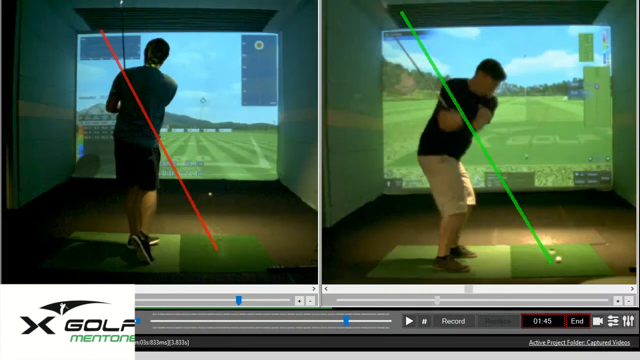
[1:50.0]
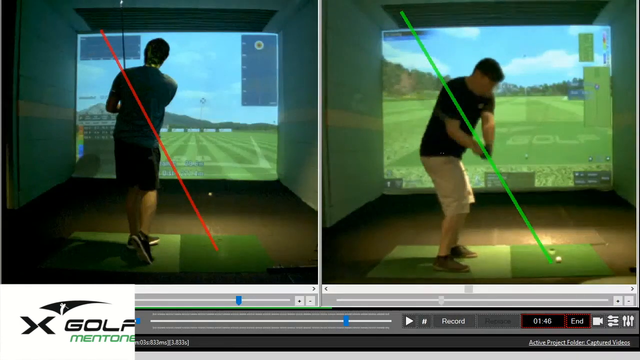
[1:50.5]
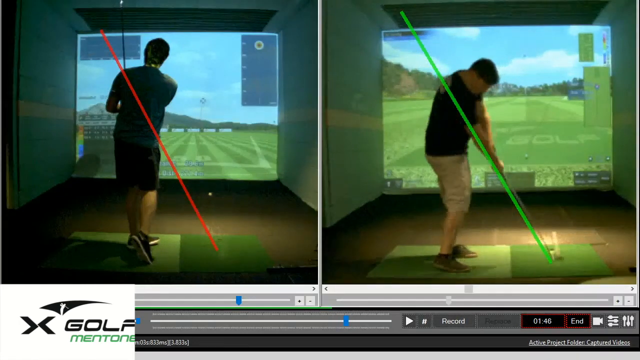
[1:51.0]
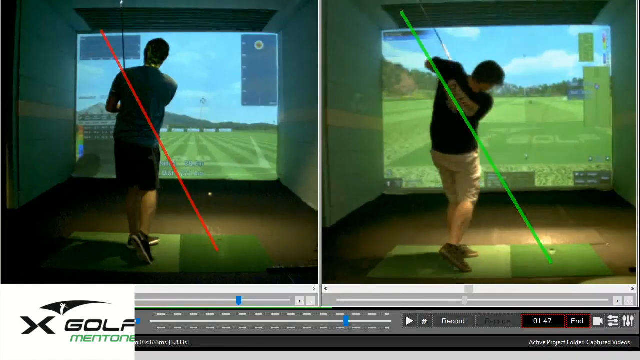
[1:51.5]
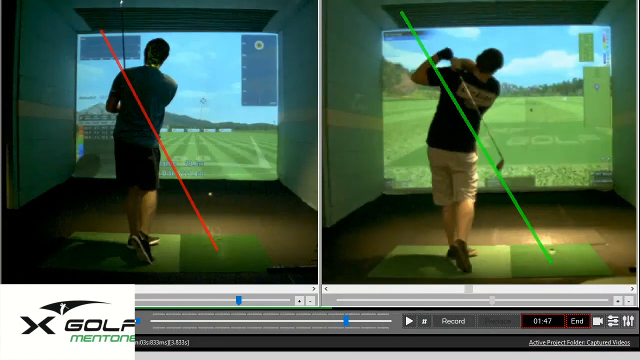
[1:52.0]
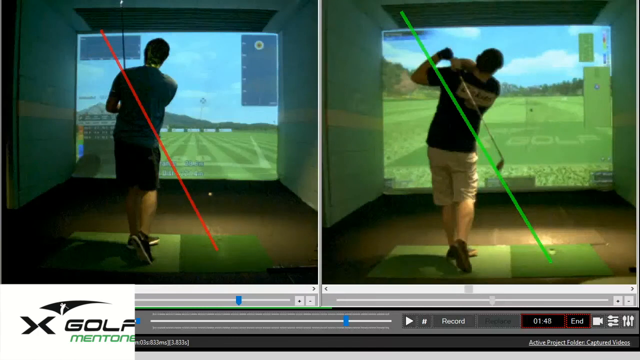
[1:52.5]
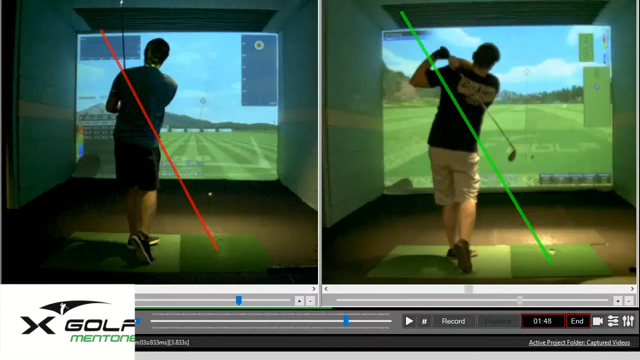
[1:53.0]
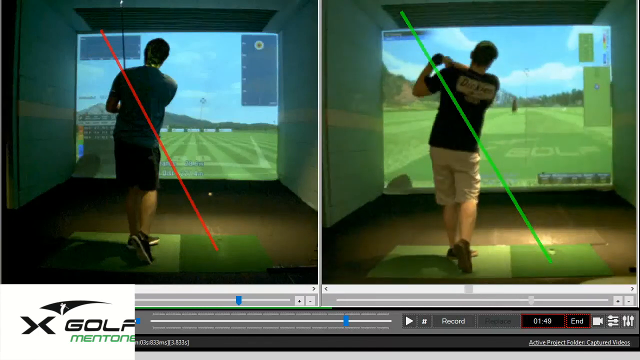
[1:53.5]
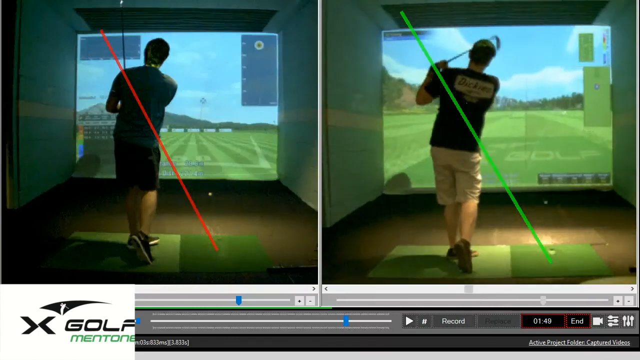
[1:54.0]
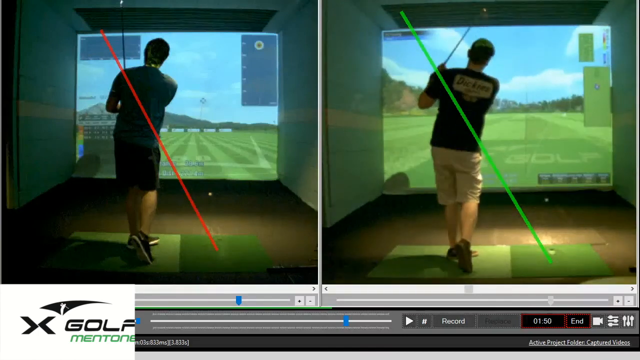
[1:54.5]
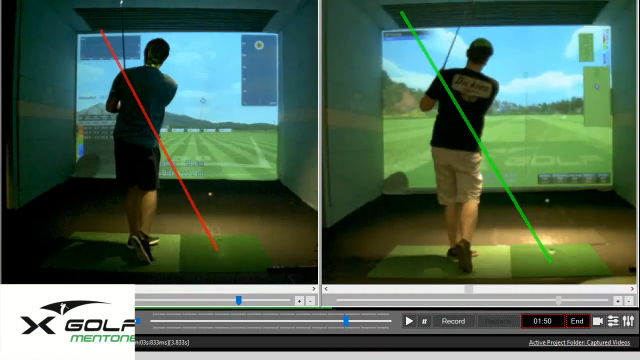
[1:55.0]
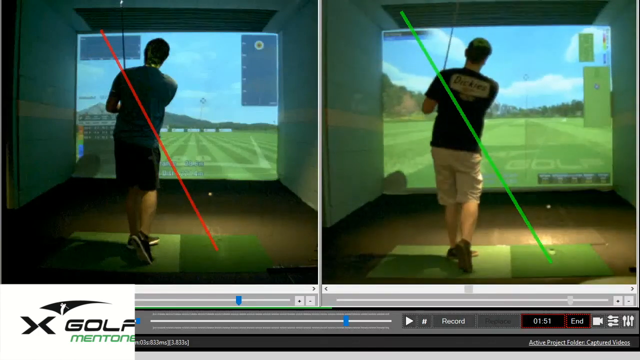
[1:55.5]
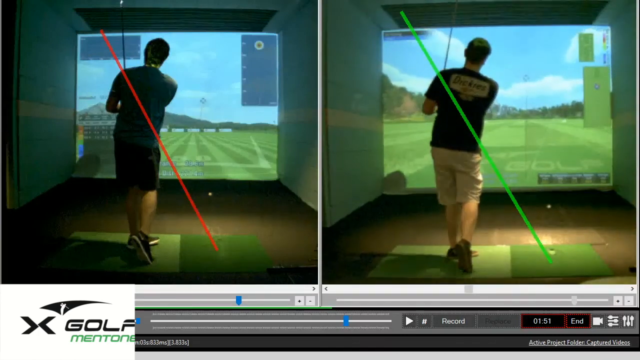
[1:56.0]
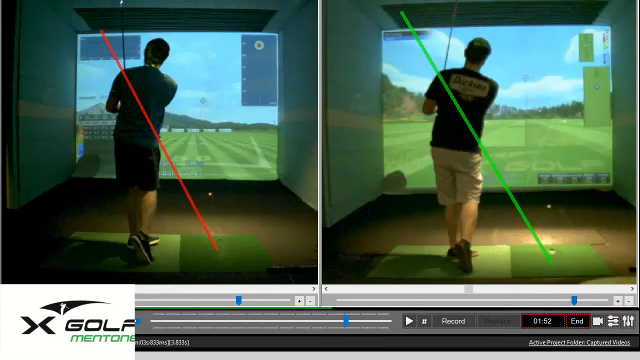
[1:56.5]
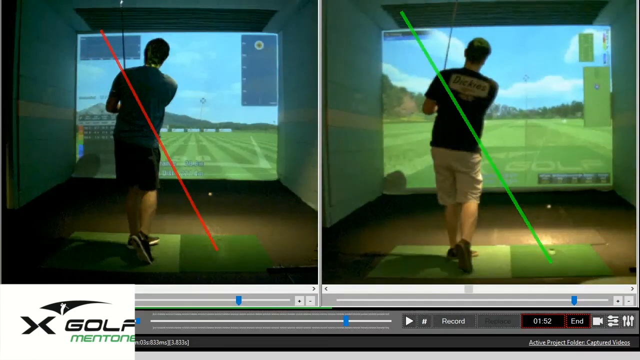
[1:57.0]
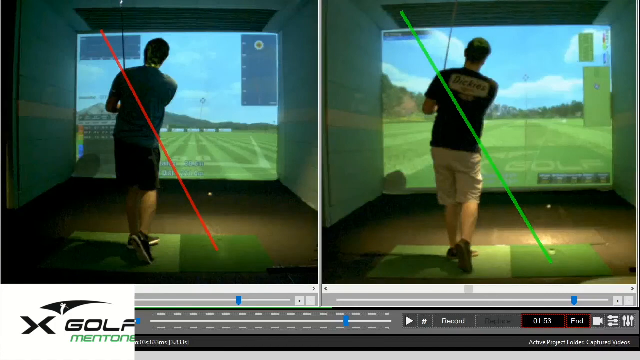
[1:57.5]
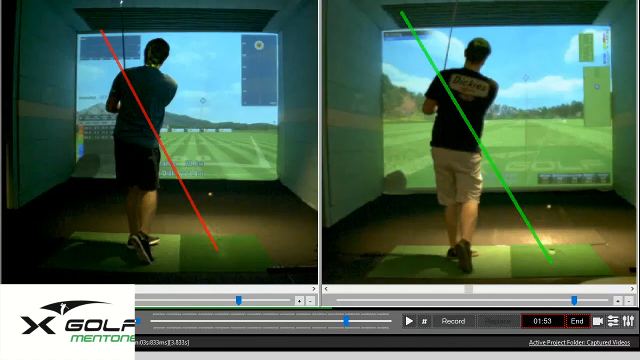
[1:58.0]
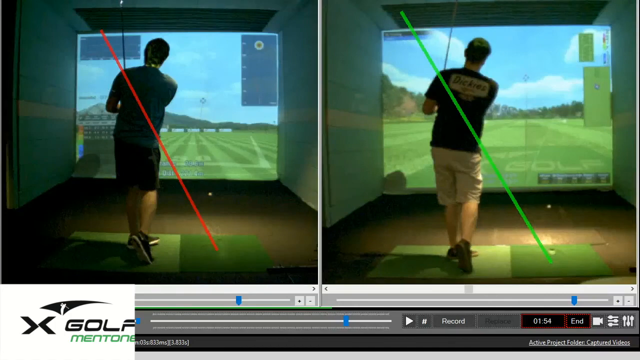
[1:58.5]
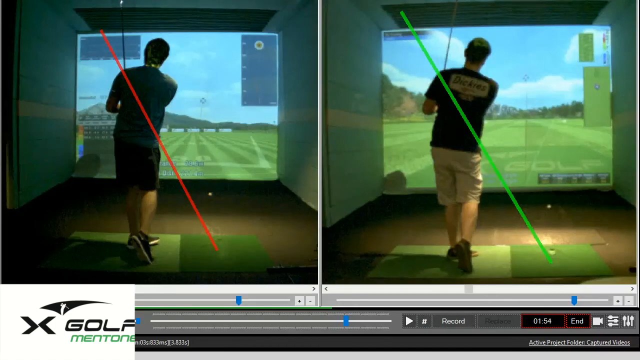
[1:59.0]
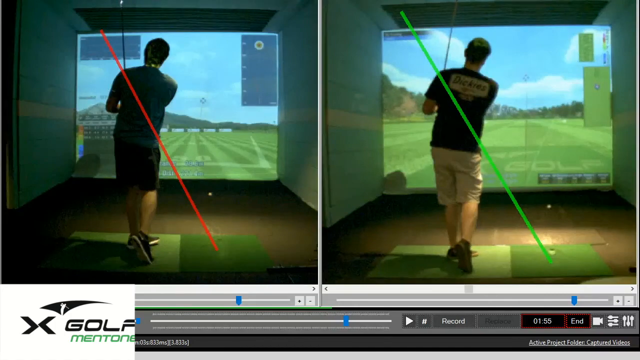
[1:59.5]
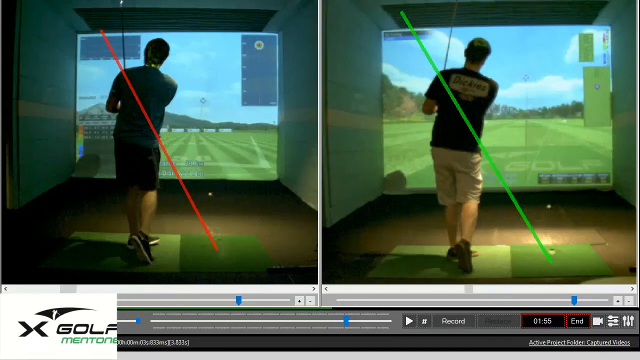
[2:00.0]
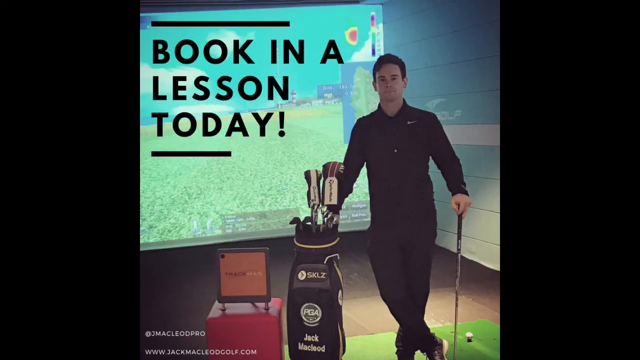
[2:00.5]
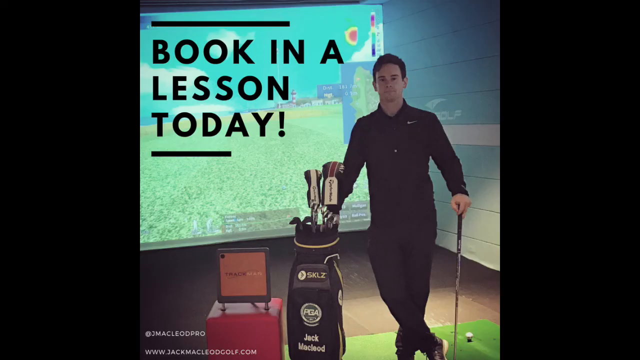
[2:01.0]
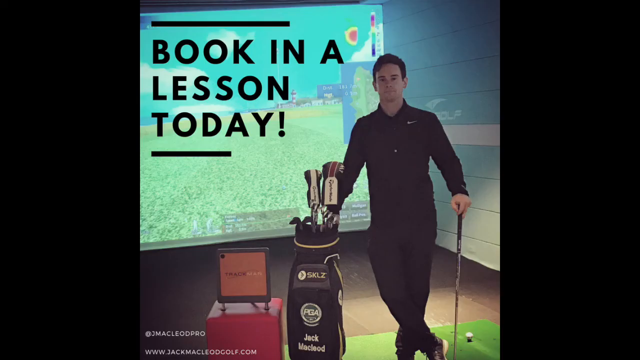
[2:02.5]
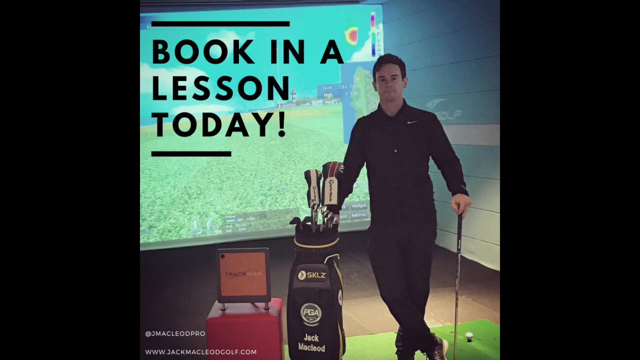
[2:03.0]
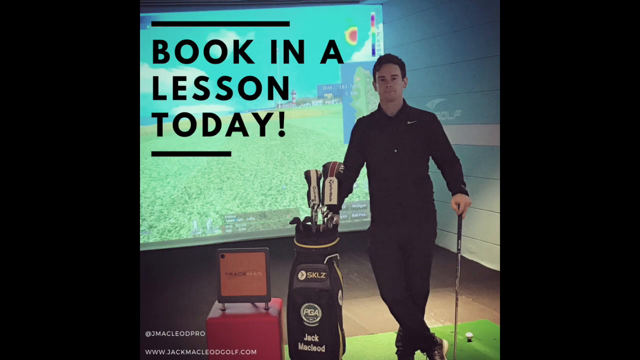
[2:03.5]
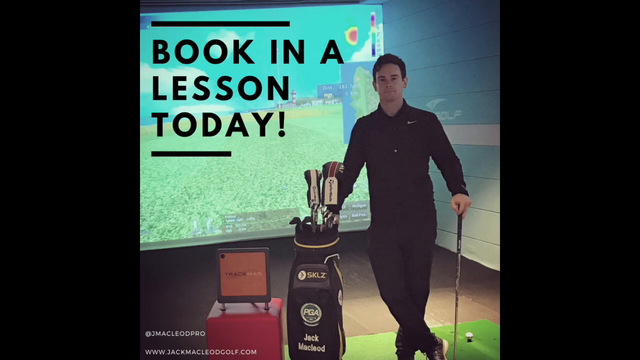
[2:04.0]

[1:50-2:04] The split-screen effect continues. On the left, a golfer in a green shirt and black shorts swings his club with a red line going through the middle, indicating incorrect form. On the right, a golfer in a black shirt and tan khaki shorts has a green line going through the middle, indicating correct form. The black, white and green logo of X-Golf Mentone is shown, its white part showing a person with a golf club. The computer program's controls at the bottom include a timer, a record button and an end button.